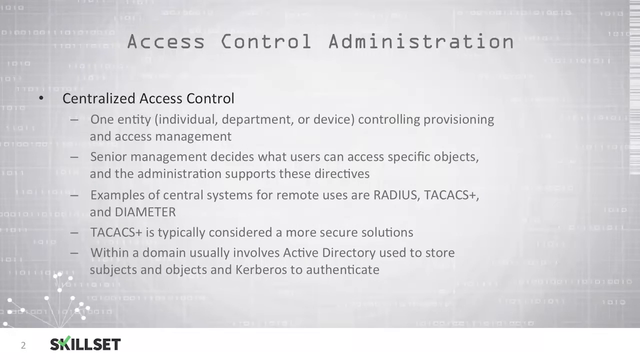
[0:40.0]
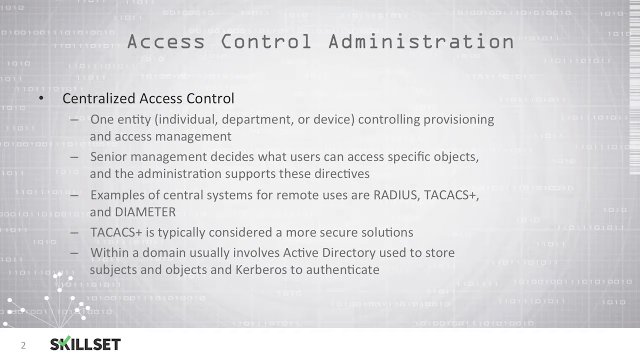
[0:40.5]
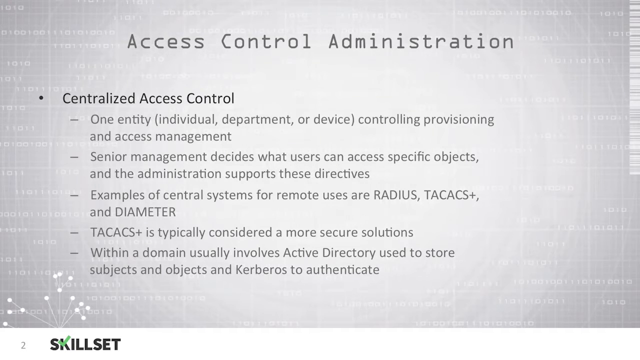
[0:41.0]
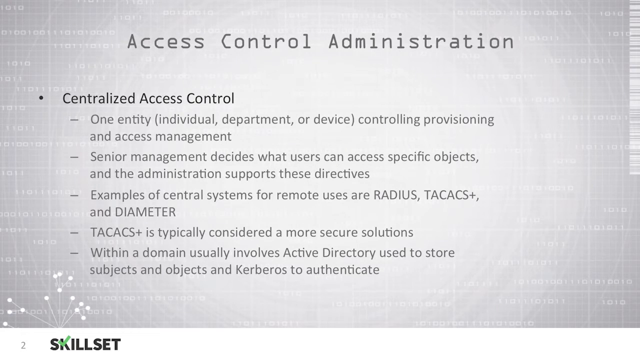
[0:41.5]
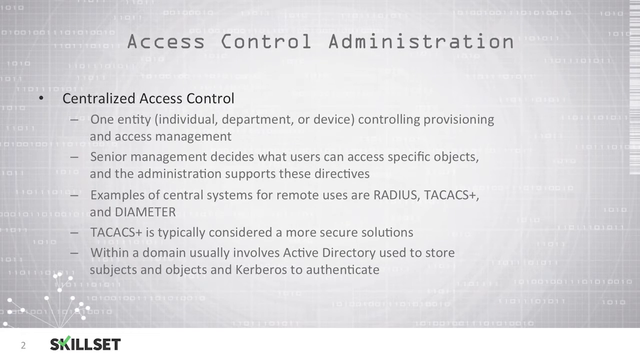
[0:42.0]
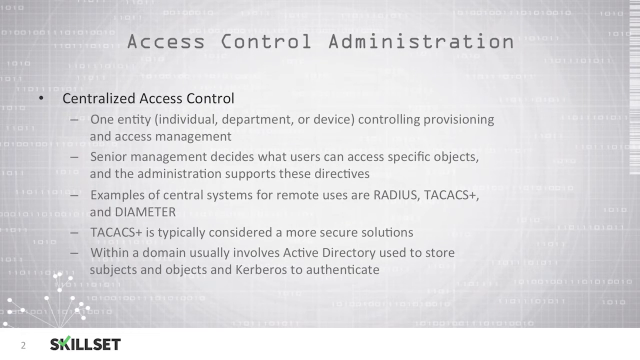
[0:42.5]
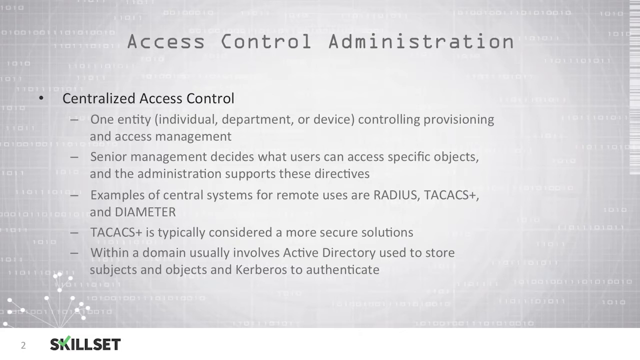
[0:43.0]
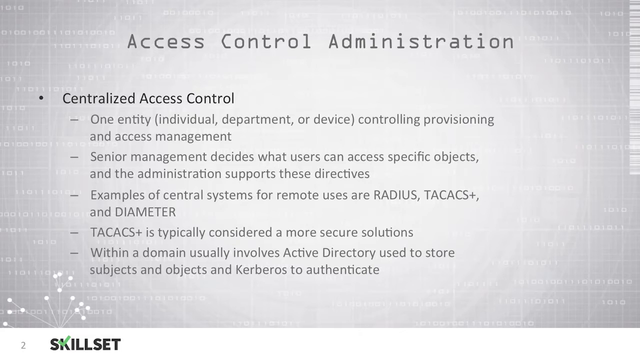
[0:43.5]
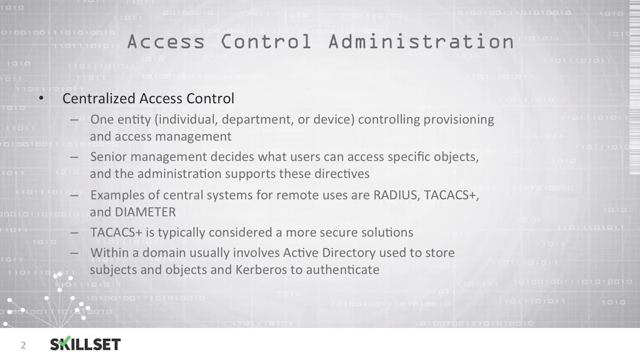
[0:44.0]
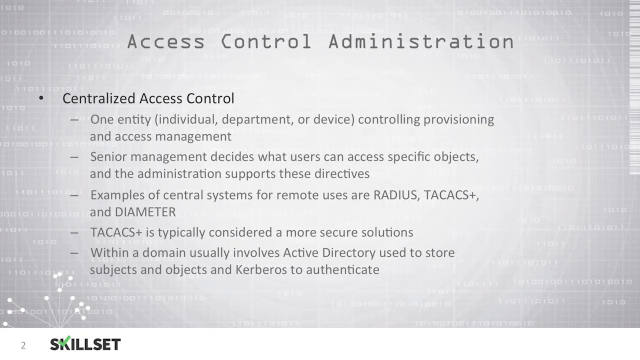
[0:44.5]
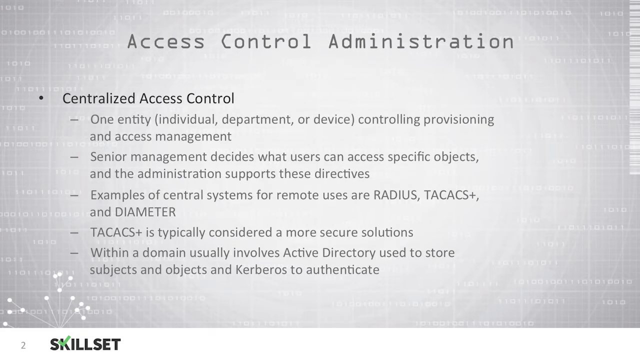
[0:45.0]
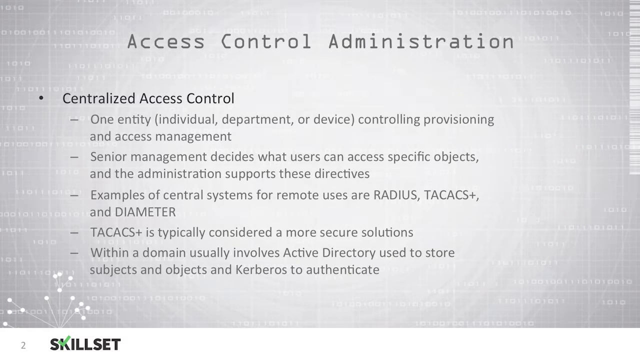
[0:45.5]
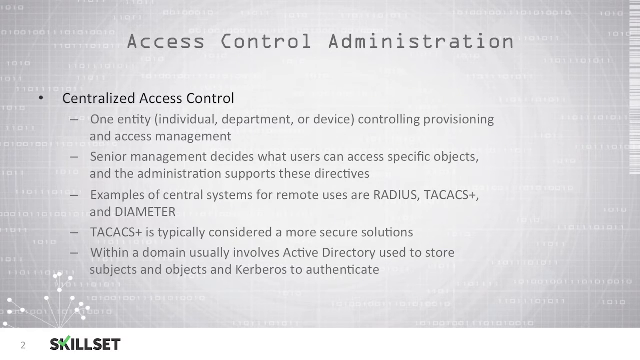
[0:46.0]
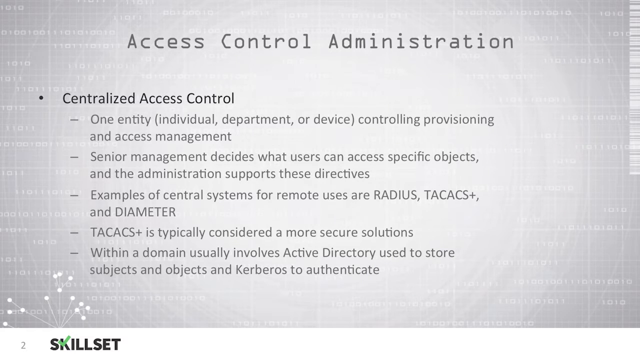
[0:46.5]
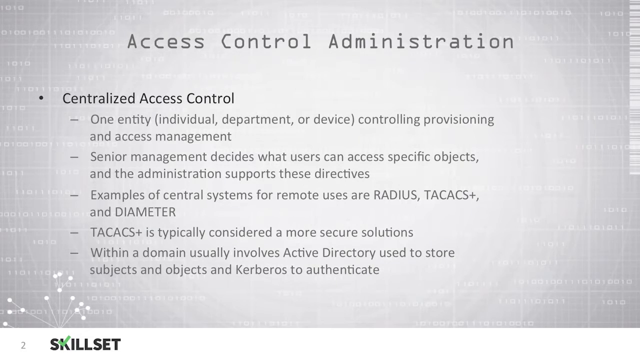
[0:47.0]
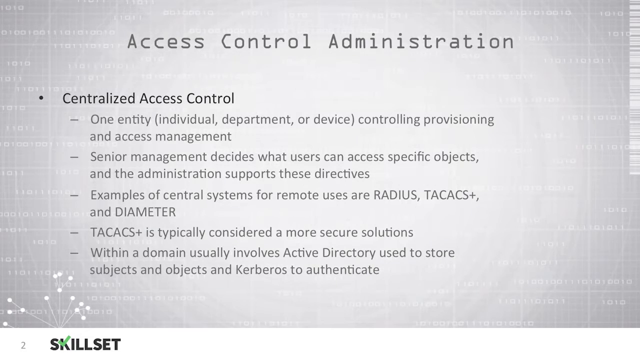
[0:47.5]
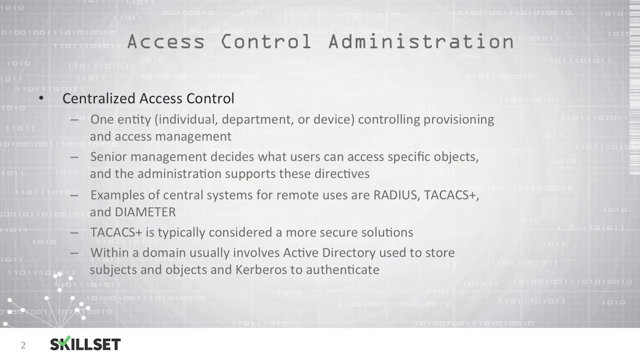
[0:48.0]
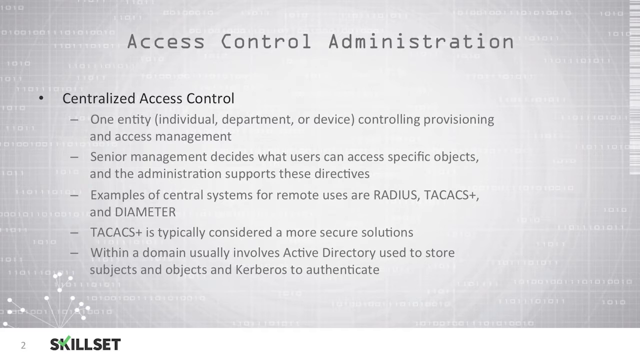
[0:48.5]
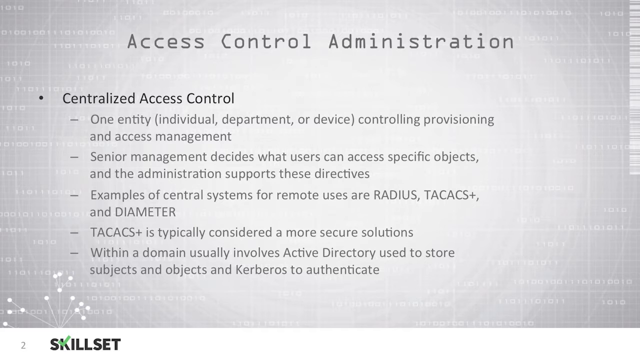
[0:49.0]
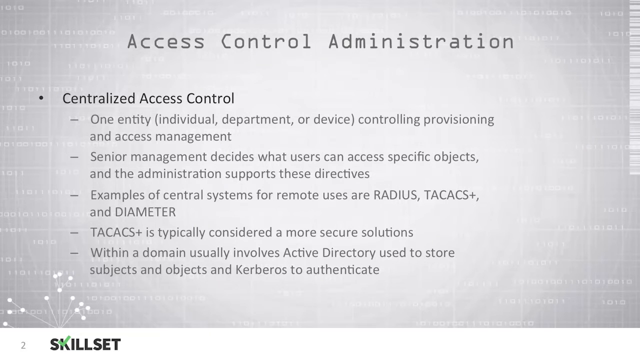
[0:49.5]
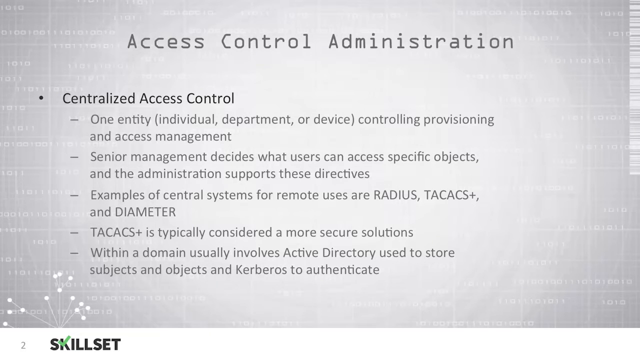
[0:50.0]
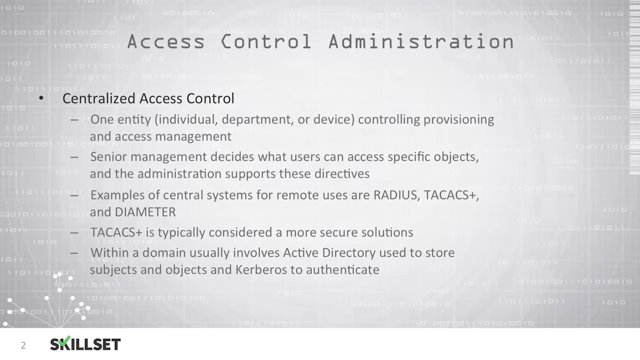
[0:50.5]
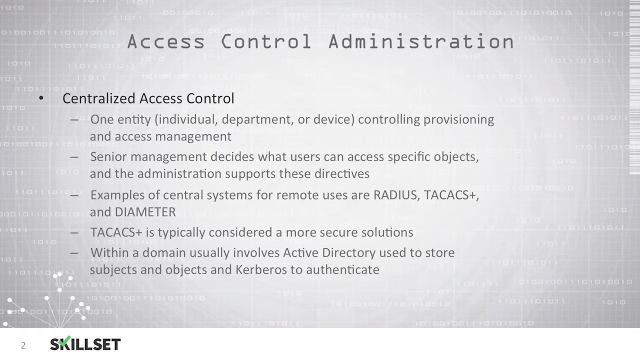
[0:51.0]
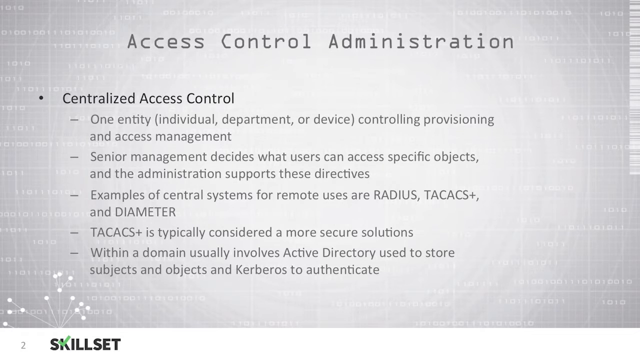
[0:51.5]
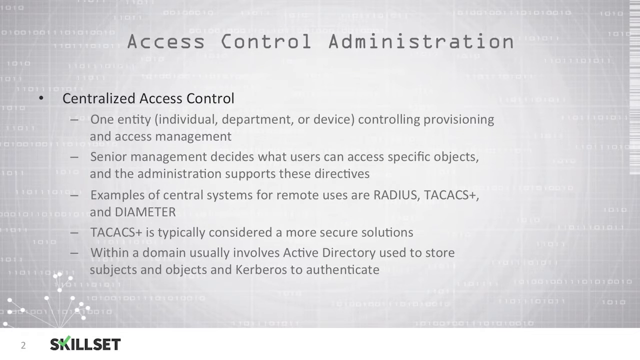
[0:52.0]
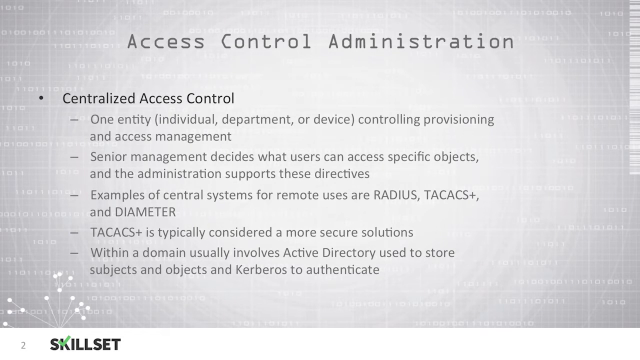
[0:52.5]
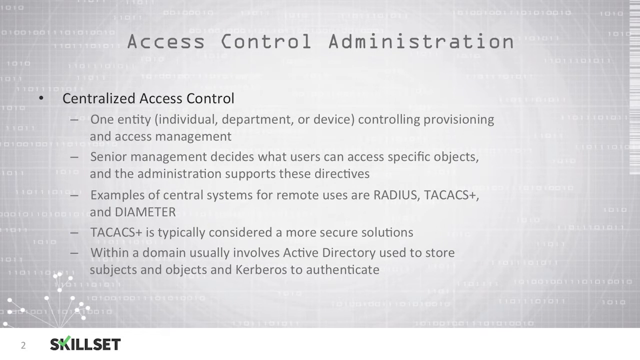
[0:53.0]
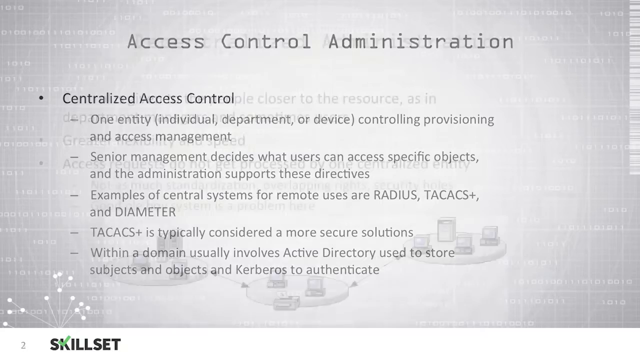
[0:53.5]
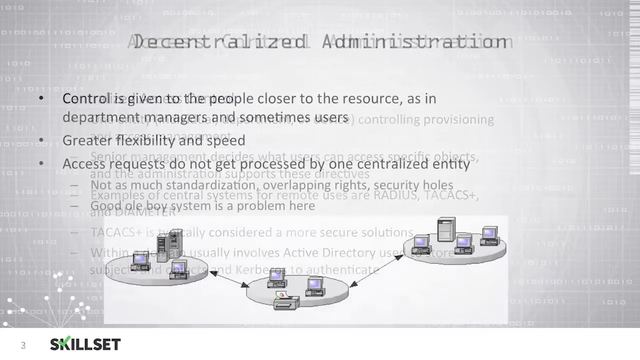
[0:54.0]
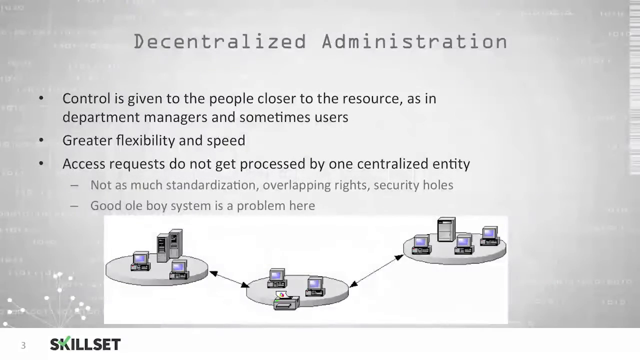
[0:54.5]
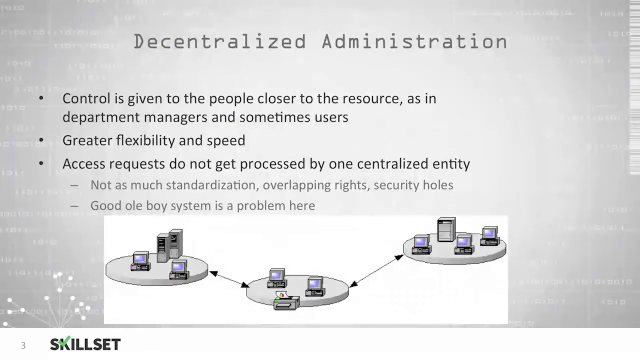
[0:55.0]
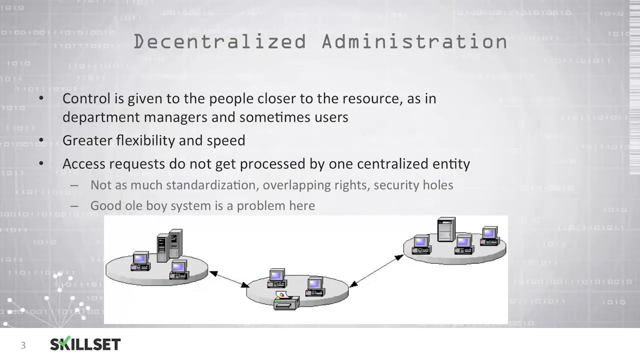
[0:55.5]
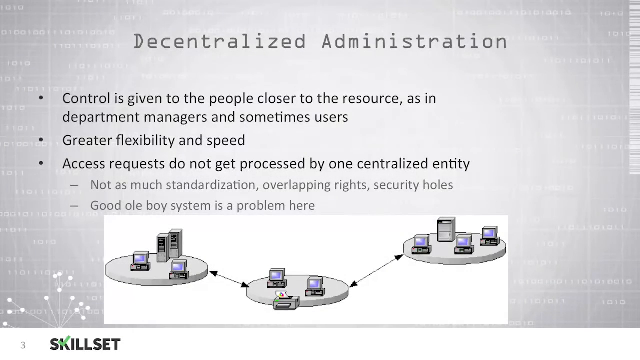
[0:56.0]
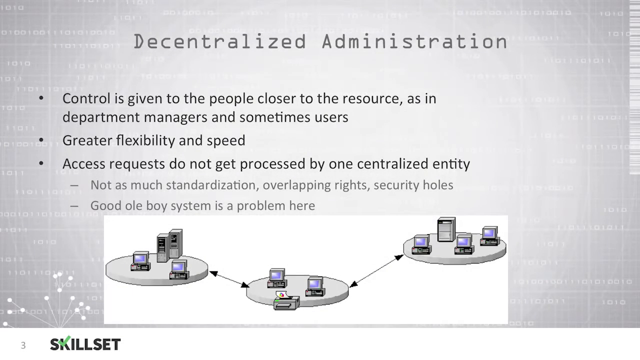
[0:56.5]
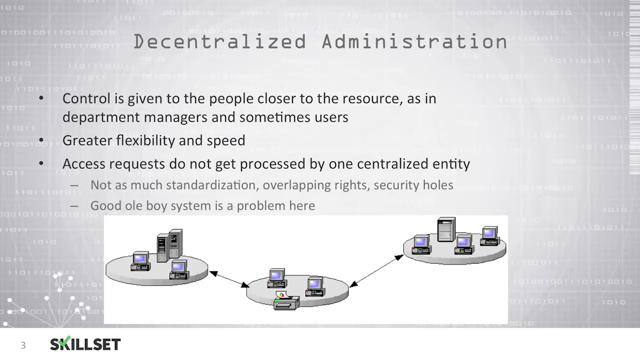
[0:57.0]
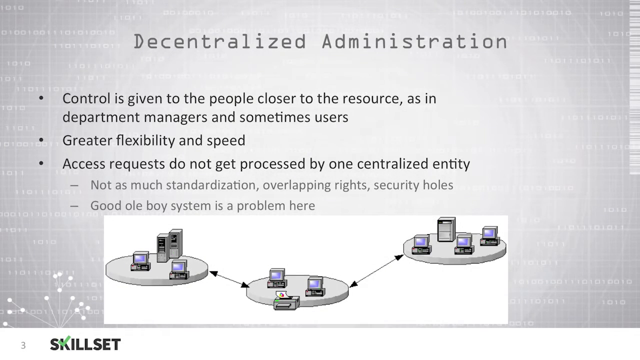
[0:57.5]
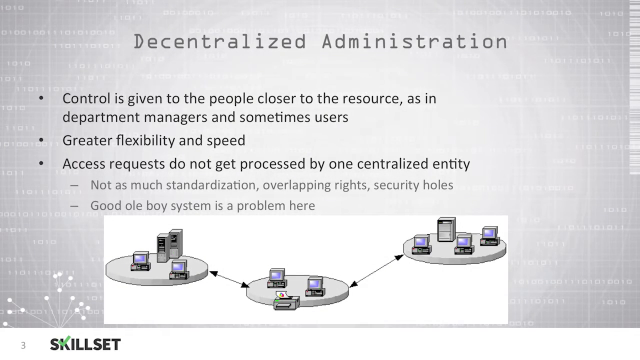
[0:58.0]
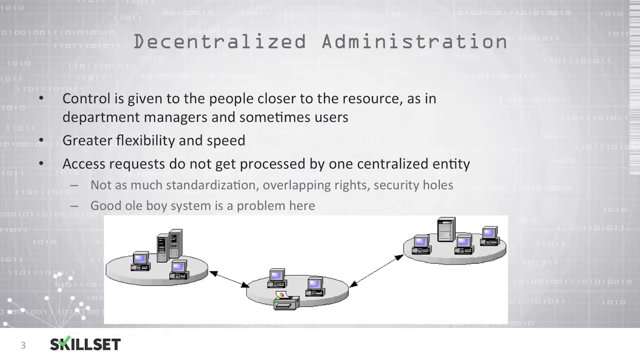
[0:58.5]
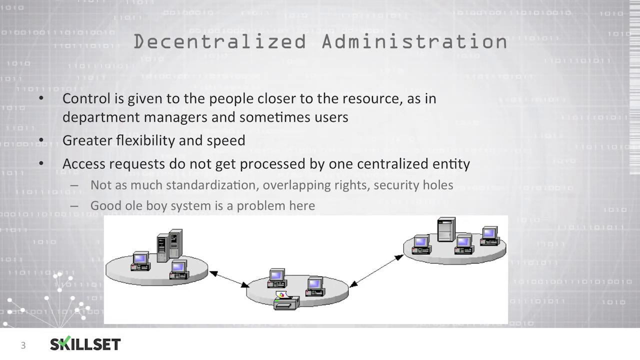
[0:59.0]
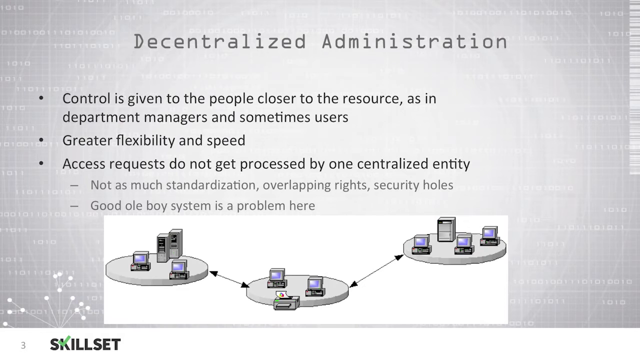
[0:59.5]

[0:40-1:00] The next page has the title "Decentralized Administration" at the top, followed by three bullet points: "control is given to the people closer to the resource, as in department managers and sometimes users"; "greater flexibility and speed"; and "access requests do not get processed by one centralized entity", which is followed by two support points in a slightly lighter gray font: "not as much standardization, overlapping rights, security holes" and "good old boy system is a problem here". Below is what looks to be an example diagram of three circular flat objects holding what look like small icons of desktop computers. Two of the circles have two computers and one has three. There is a printer in the middle circle, the far left circle has two towers, and the circle farthest to the right appears to also have some kind of printer.